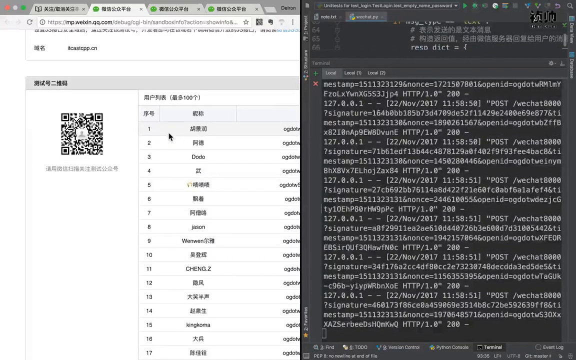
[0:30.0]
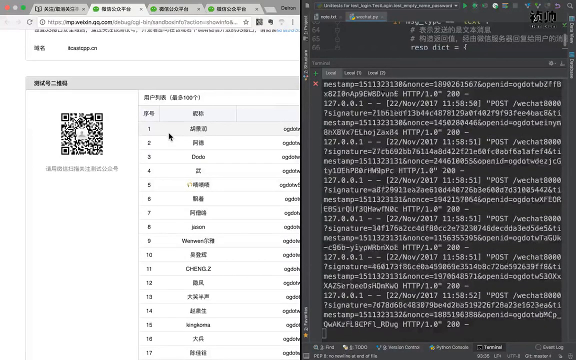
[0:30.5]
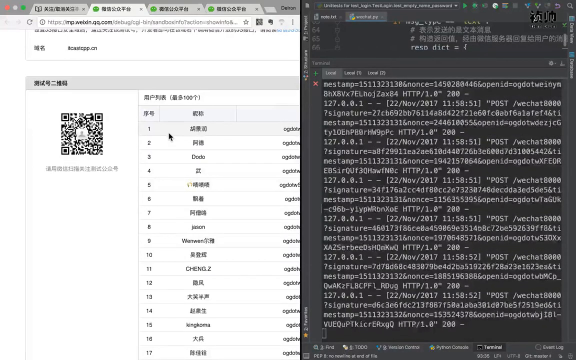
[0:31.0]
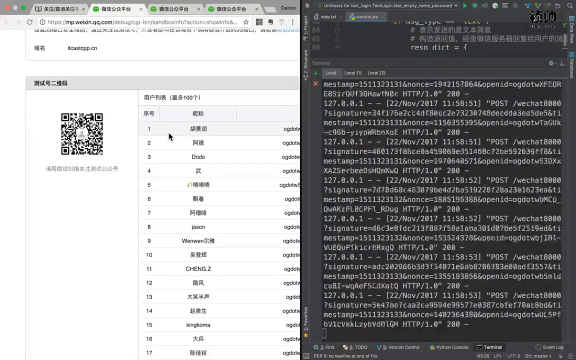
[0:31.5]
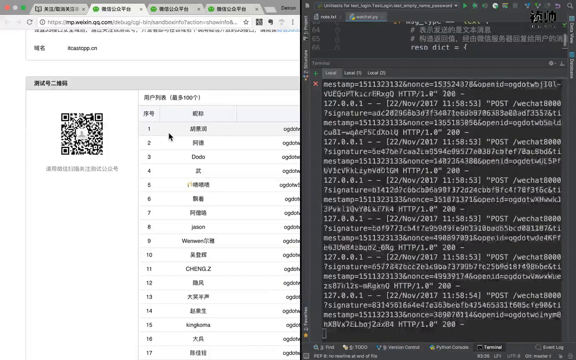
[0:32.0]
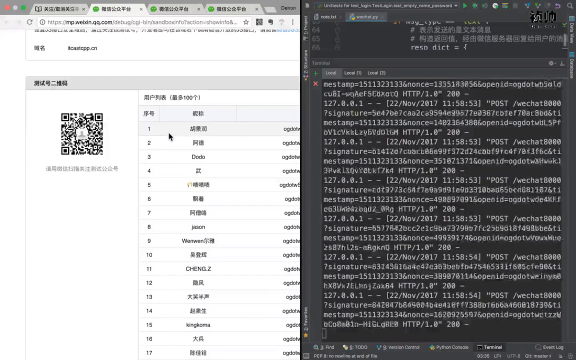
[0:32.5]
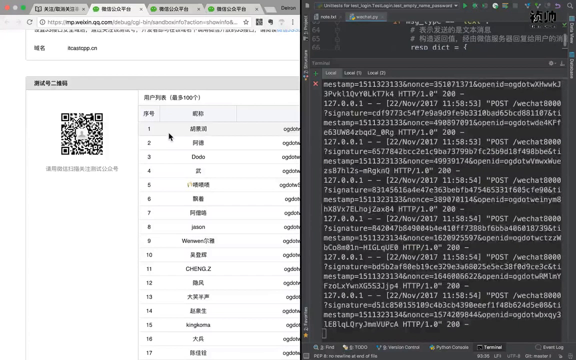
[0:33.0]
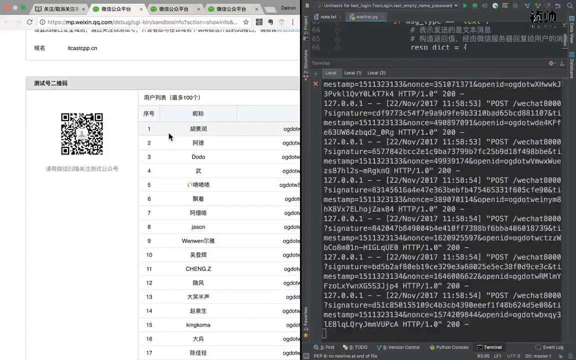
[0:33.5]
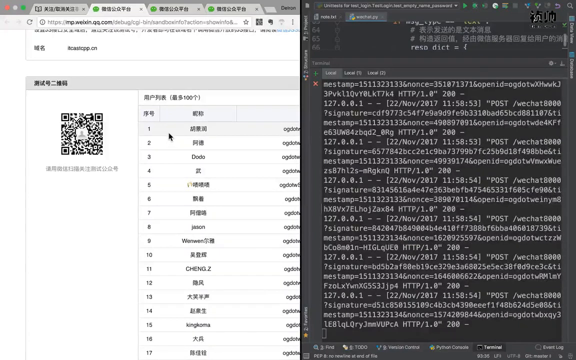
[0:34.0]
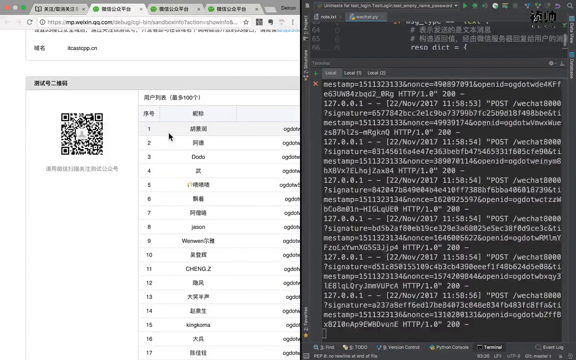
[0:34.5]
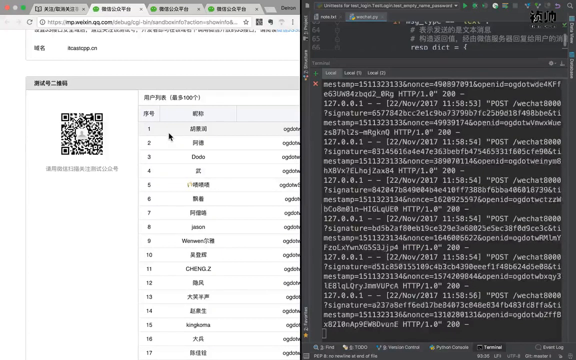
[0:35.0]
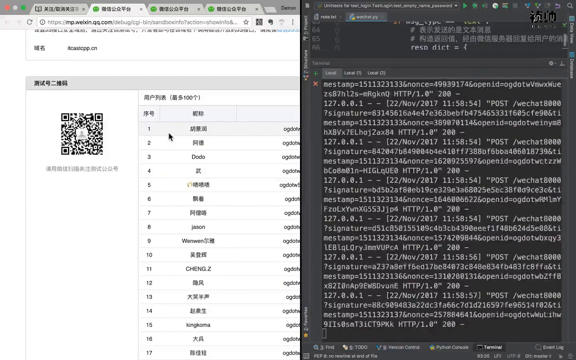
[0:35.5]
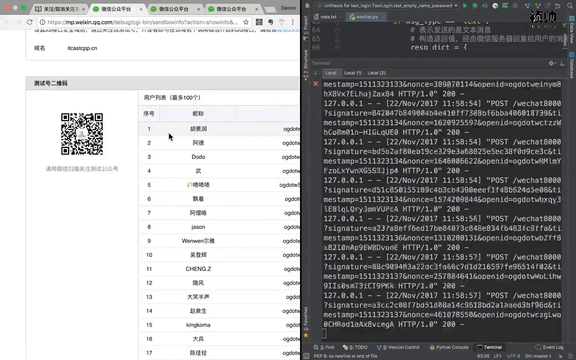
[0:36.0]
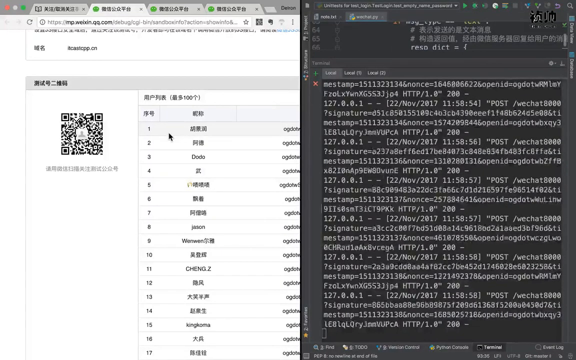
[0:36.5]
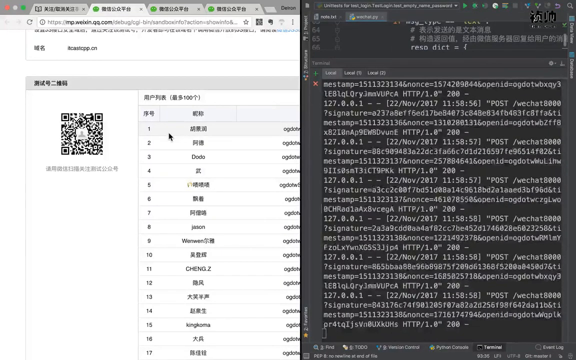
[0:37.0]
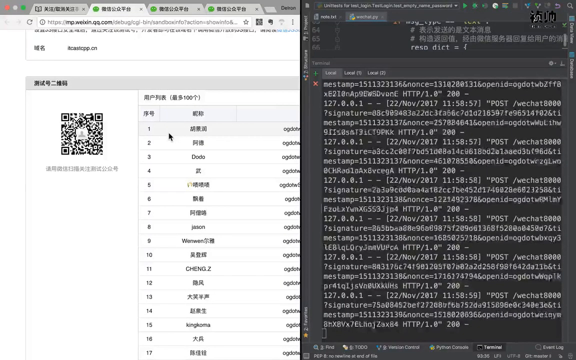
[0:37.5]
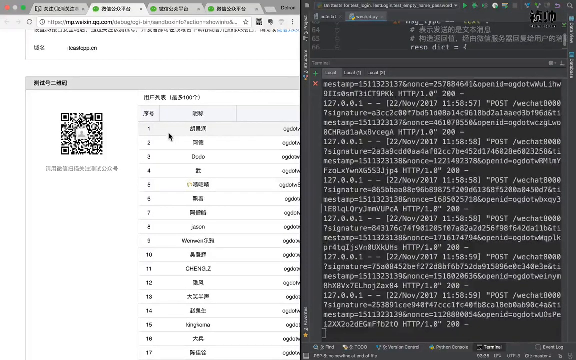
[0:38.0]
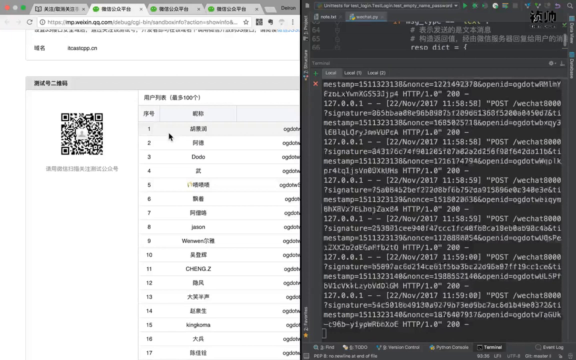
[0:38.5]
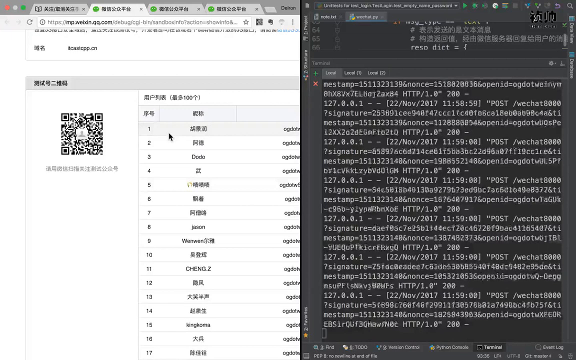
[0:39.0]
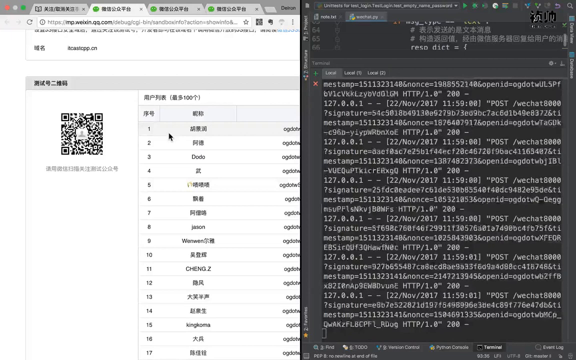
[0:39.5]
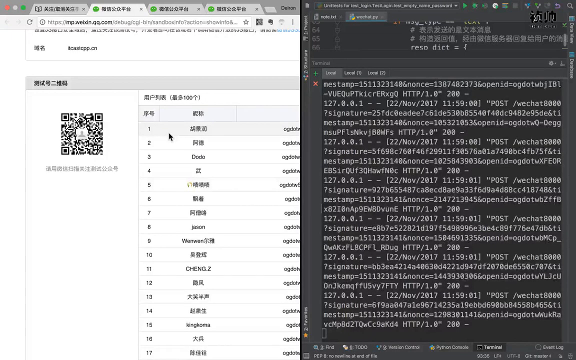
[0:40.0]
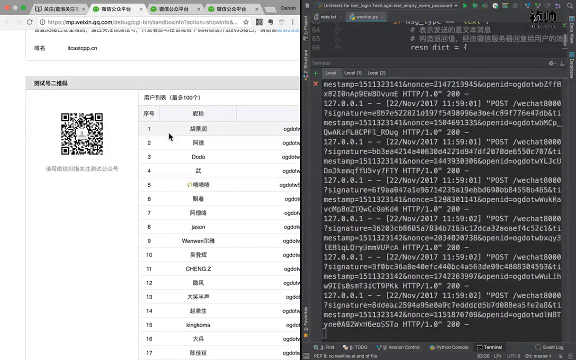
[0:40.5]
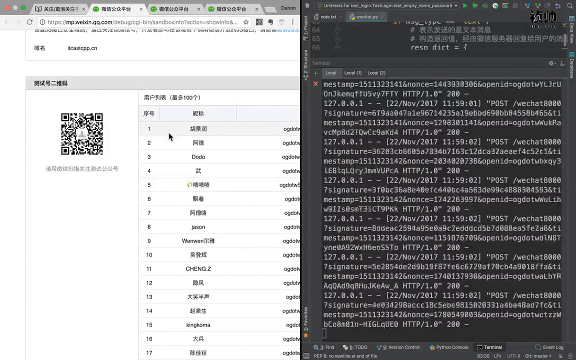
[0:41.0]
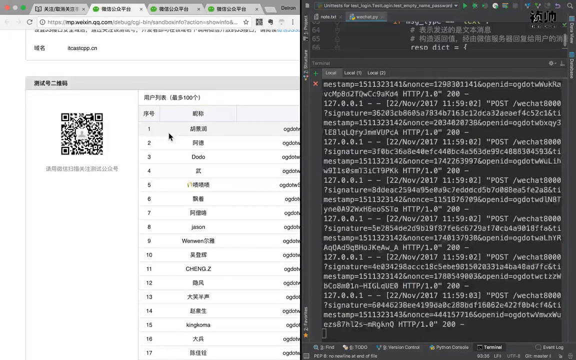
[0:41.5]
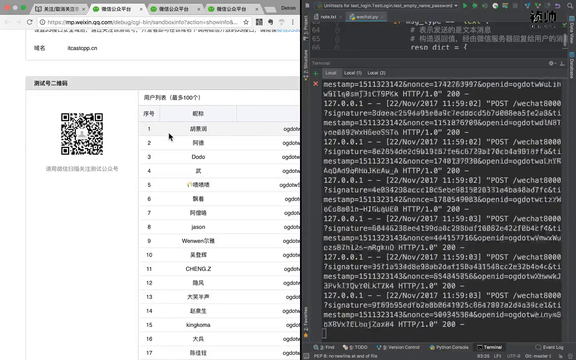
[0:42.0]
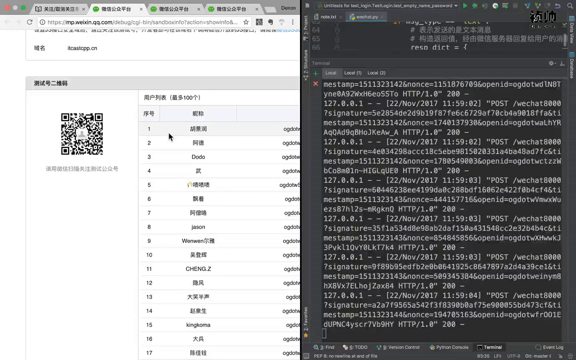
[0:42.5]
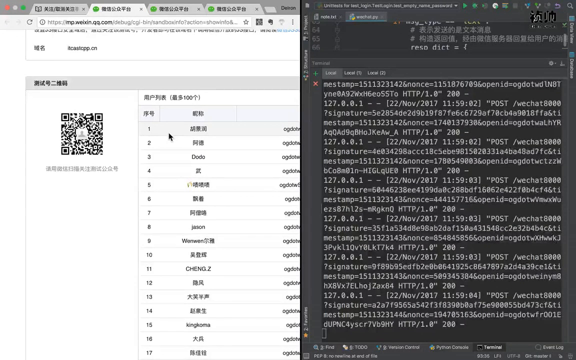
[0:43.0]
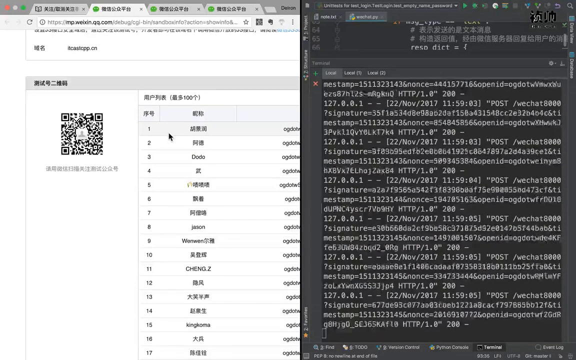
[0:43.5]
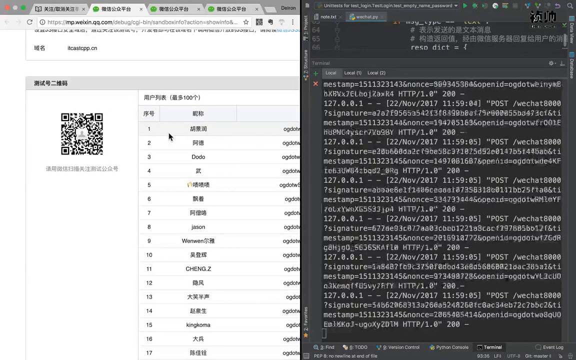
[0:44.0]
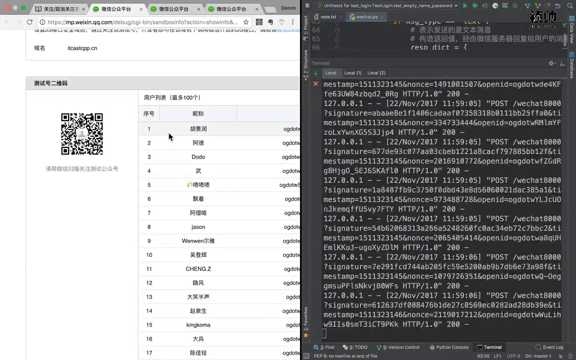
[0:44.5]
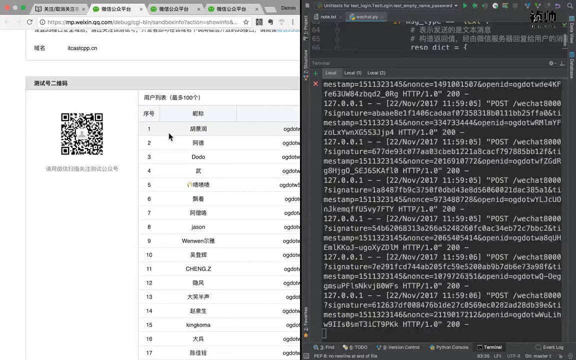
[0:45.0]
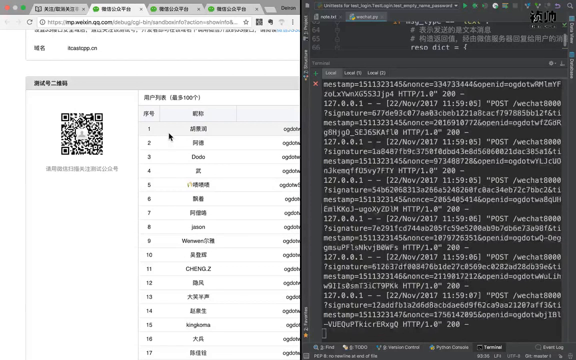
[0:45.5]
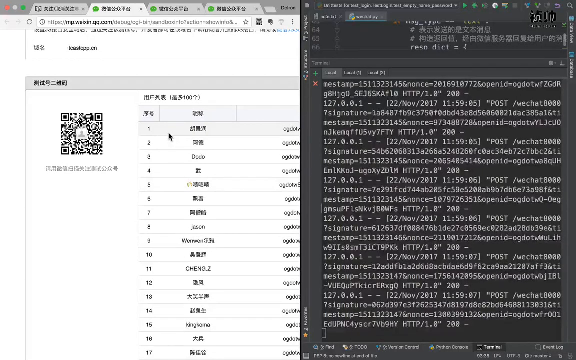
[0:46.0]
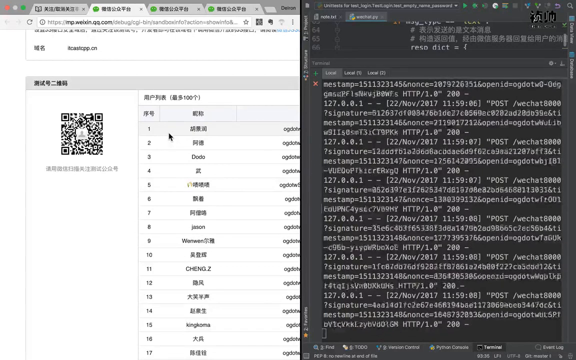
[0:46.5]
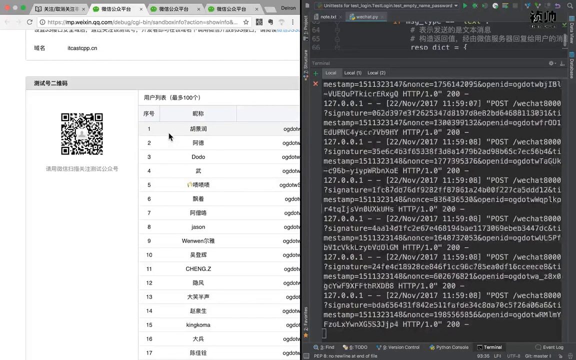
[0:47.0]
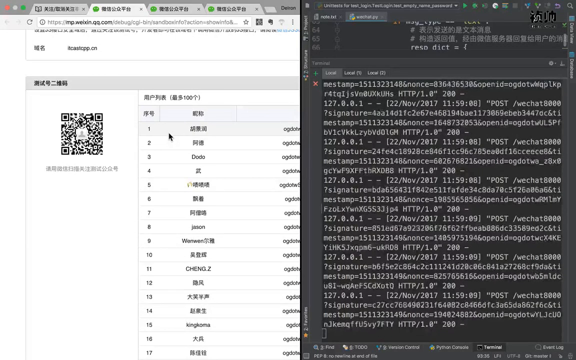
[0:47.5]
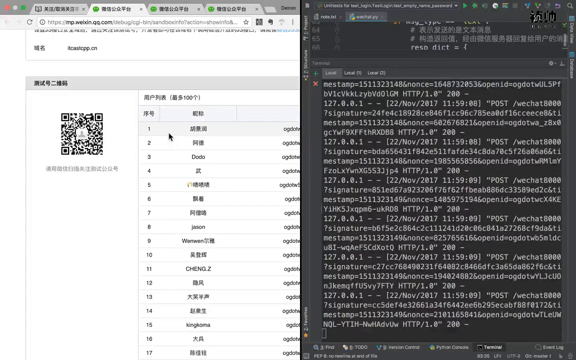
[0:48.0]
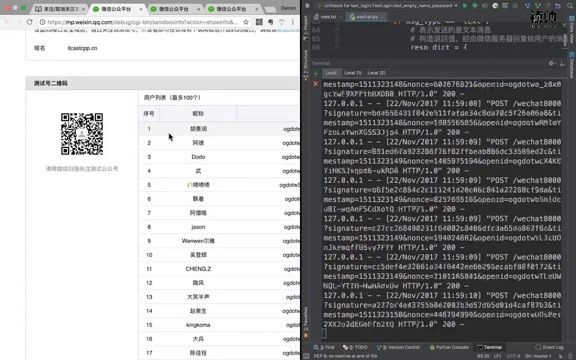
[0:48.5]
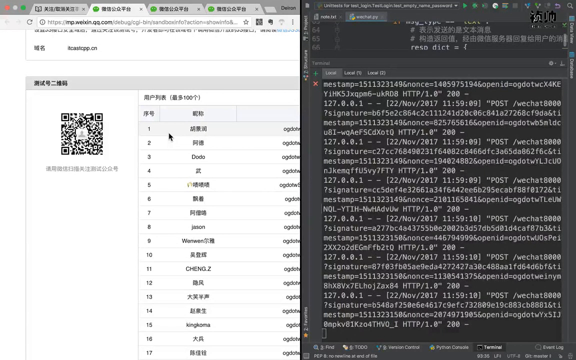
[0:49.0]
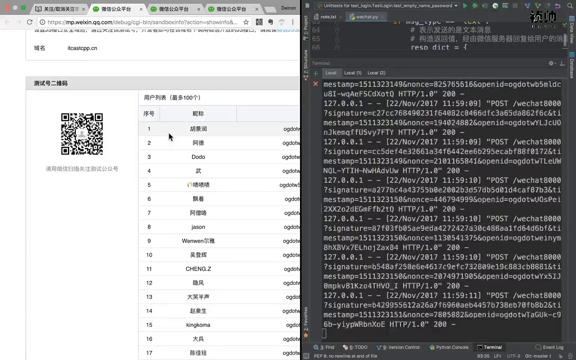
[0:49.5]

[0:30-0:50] The same person apparently has something running in the background. On the right, their code is constantly printing out data, which keeps scrolling up. A lot of data seems to be coming in, with maybe two or three posts every millisecond. Each entry has a timestamp reading November 22nd, 2017 at 11.58, which later becomes 11.59. The left side of the screen is mostly static, and the person seems to be just watching it play out in the program.